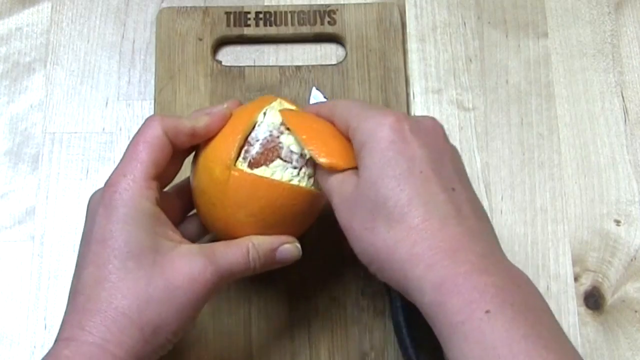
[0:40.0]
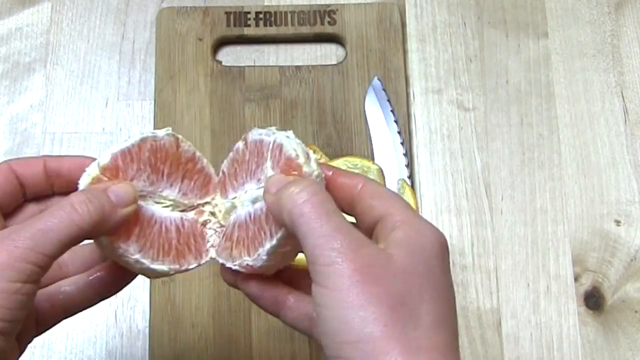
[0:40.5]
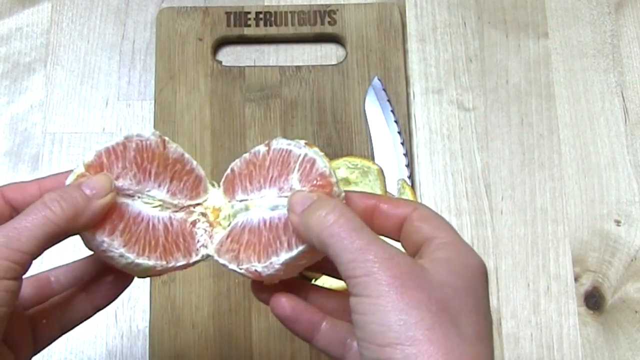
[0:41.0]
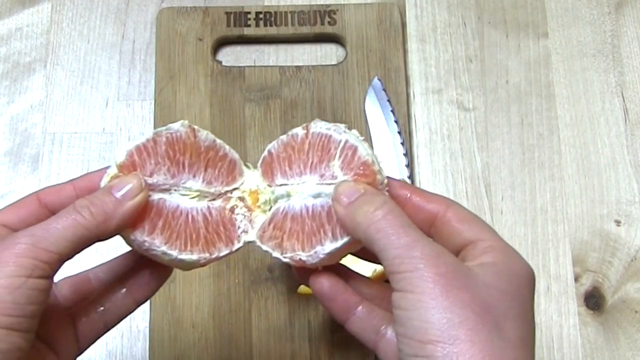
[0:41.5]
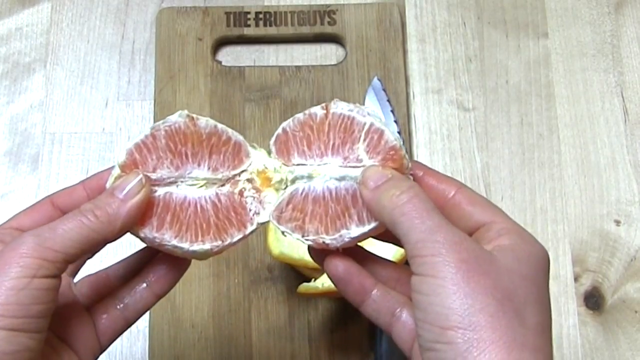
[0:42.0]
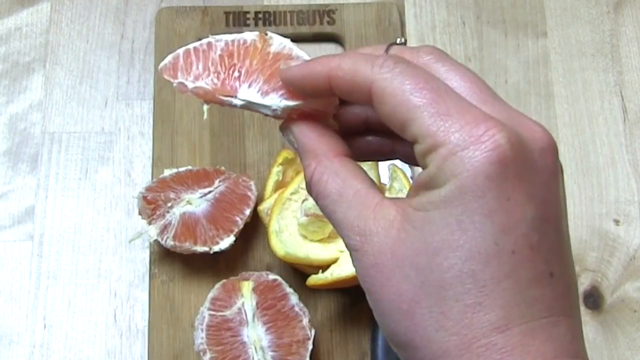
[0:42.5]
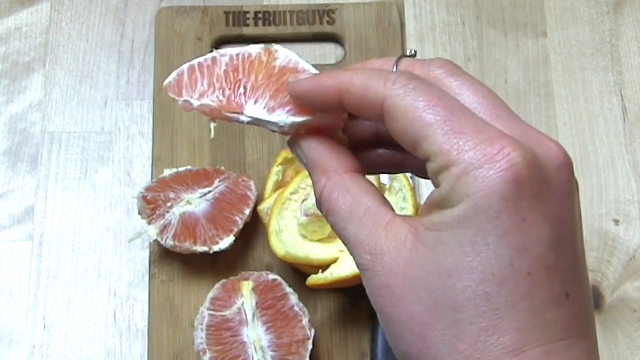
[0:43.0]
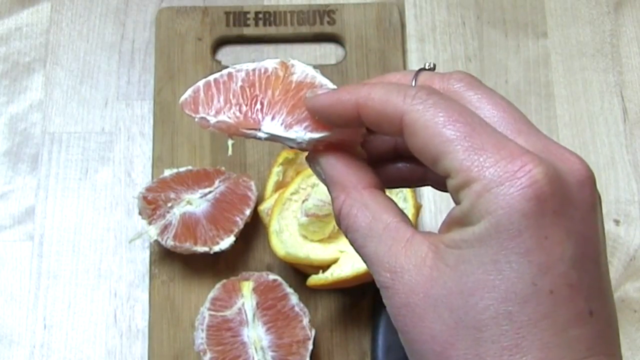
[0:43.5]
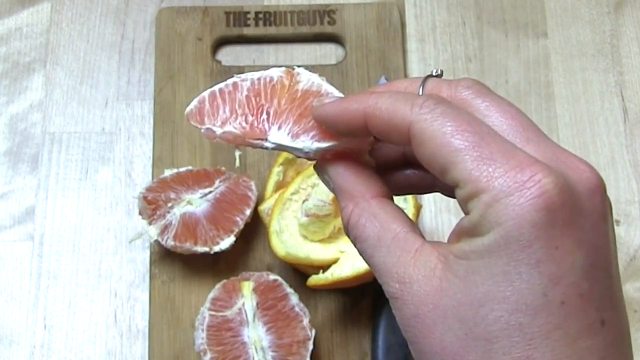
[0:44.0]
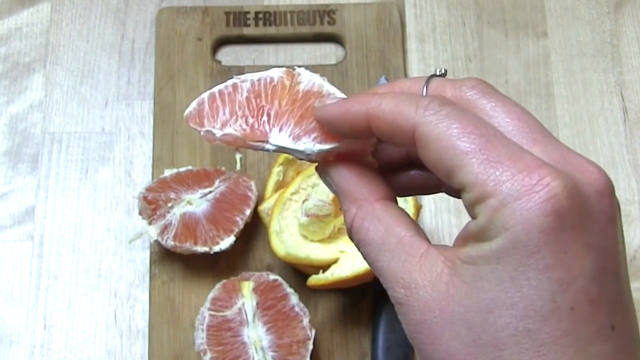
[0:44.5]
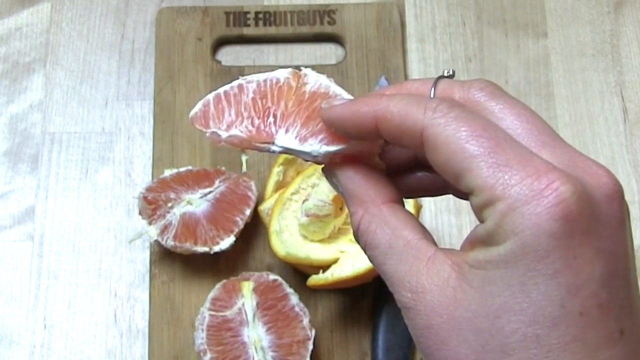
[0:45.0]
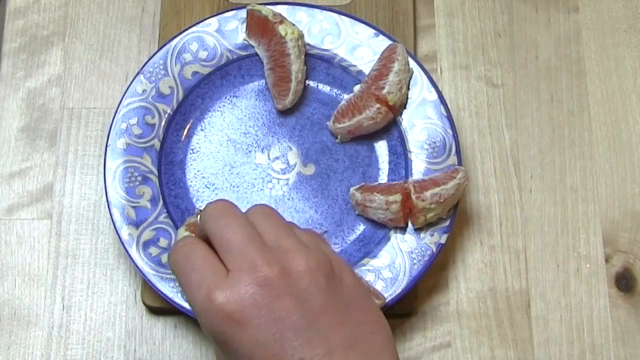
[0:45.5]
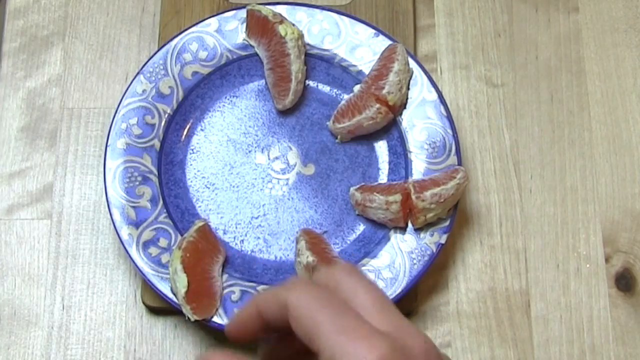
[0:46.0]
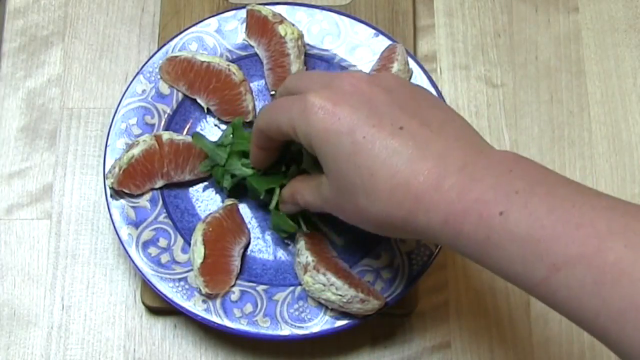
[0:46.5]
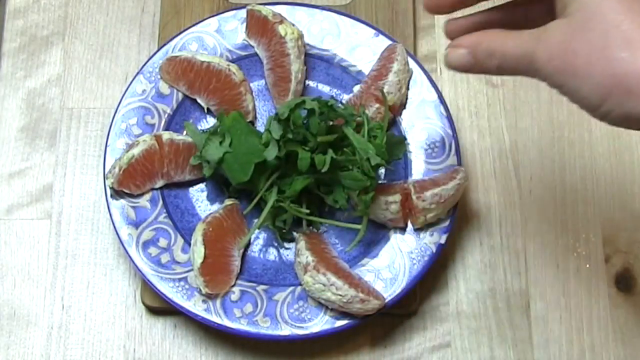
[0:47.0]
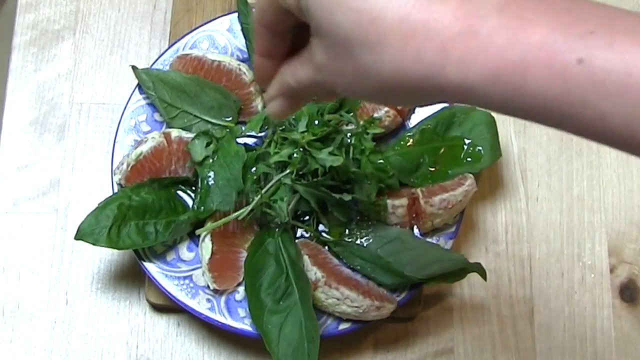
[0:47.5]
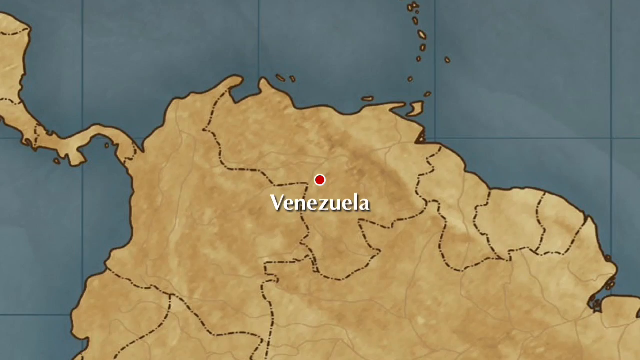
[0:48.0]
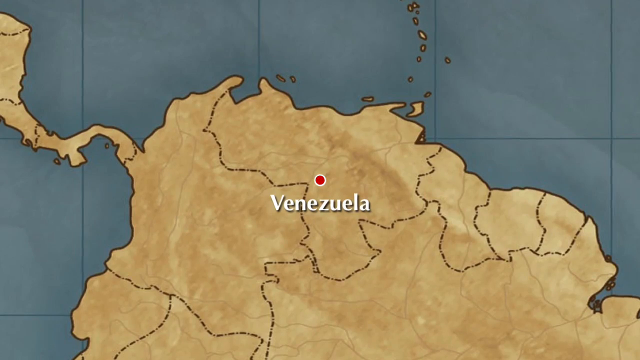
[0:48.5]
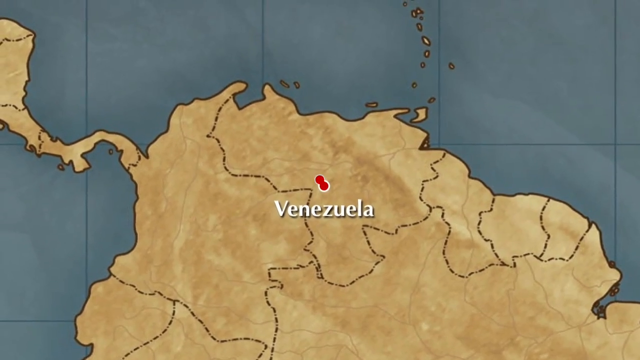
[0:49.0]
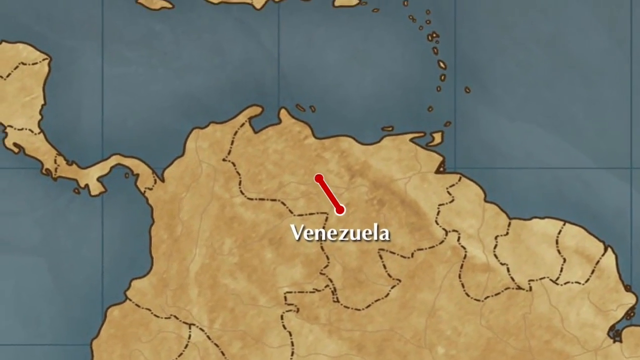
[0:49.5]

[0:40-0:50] Someone peels a grapefruit, pulls two sections open, and then a single segment is shown. The segments are placed symmetrically around a plate, going around and around, and leafy greens that could be arugula or spinach are put in the middle. A map of Venezuela then appears with a red line running roughly diagonally from left to right across an area of Venezuela, possibly indicating where some of the fruit comes from.